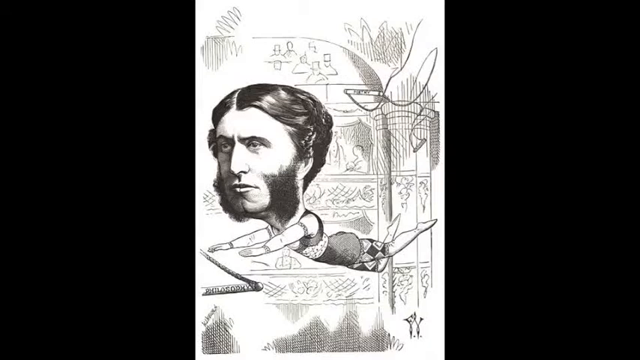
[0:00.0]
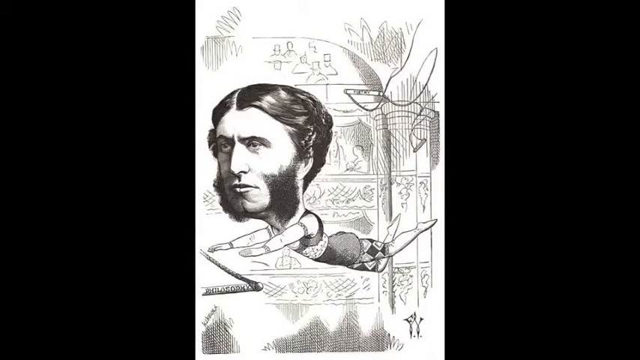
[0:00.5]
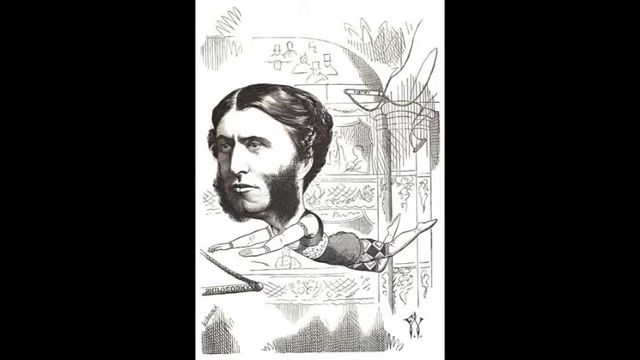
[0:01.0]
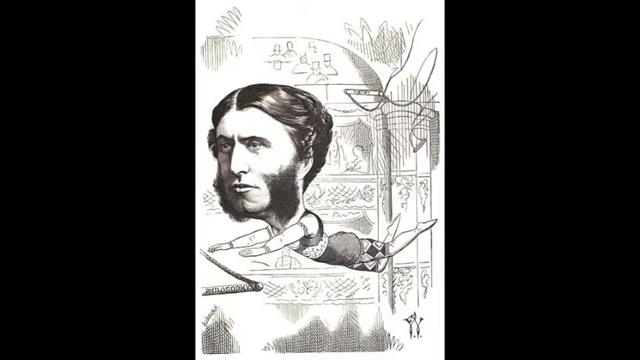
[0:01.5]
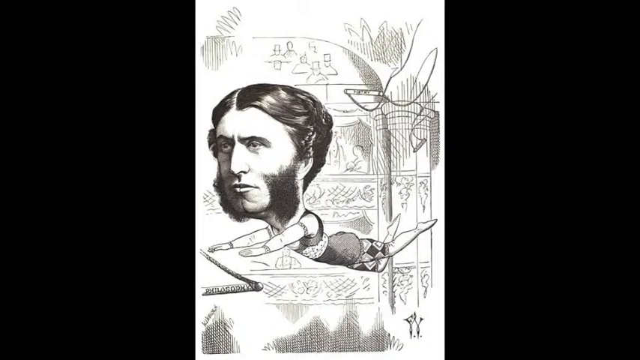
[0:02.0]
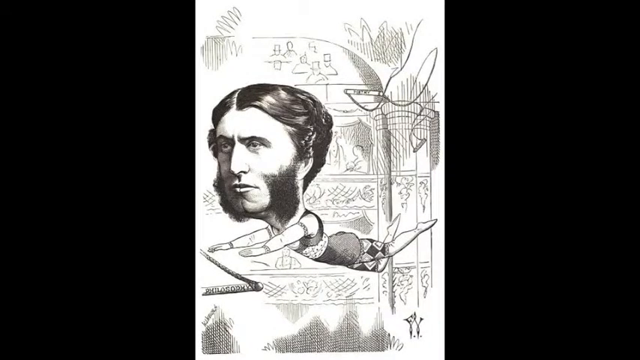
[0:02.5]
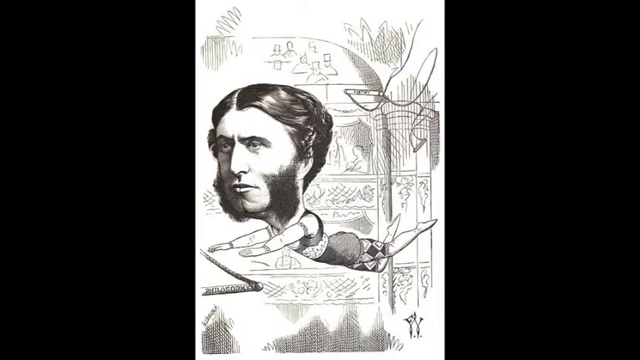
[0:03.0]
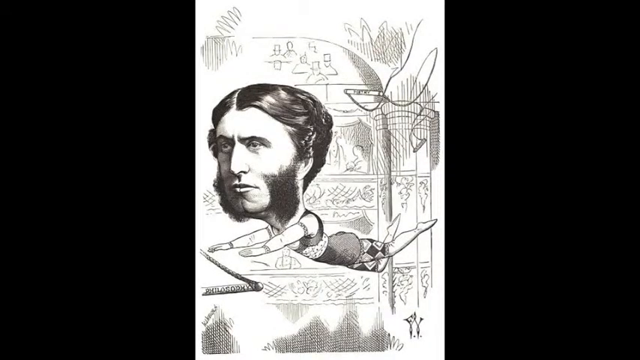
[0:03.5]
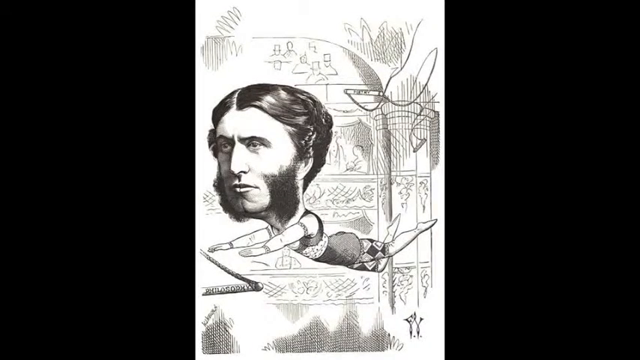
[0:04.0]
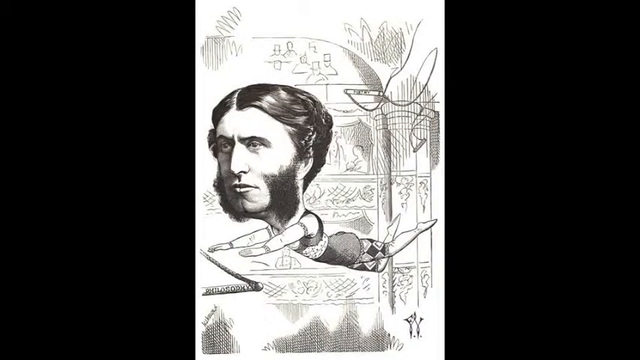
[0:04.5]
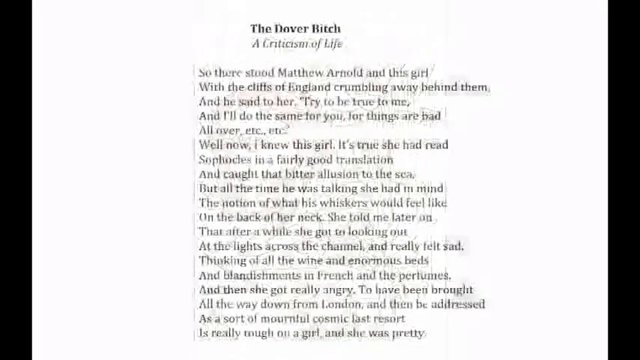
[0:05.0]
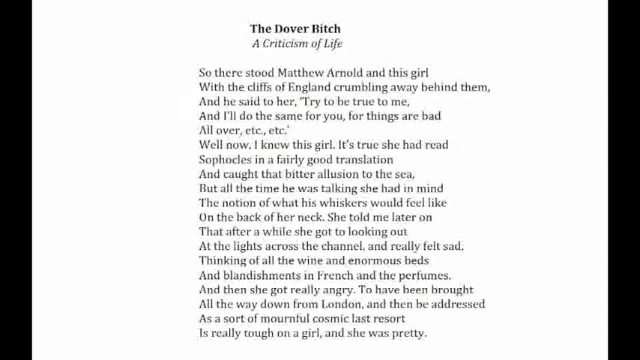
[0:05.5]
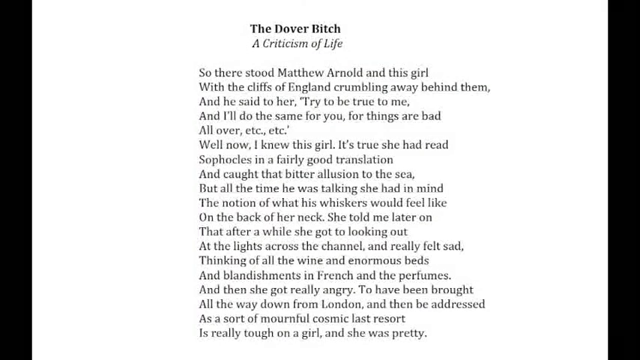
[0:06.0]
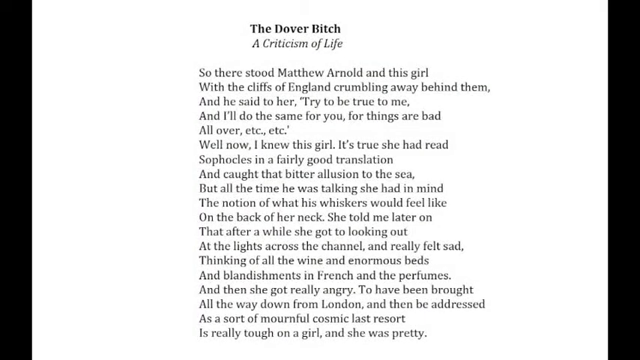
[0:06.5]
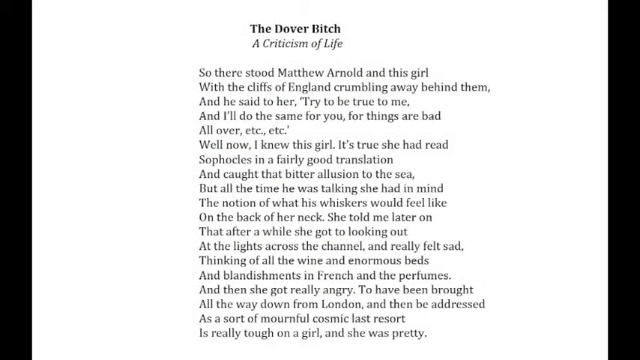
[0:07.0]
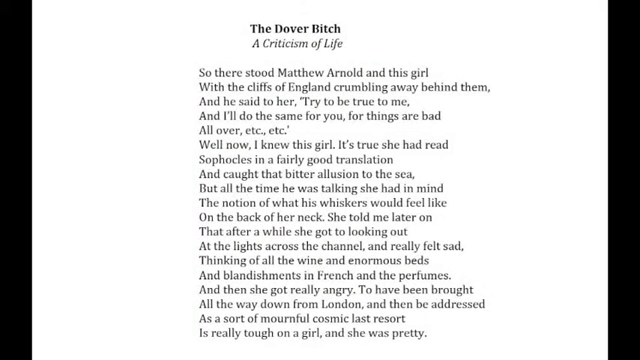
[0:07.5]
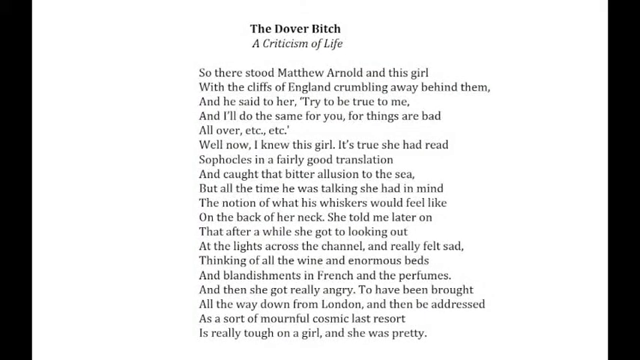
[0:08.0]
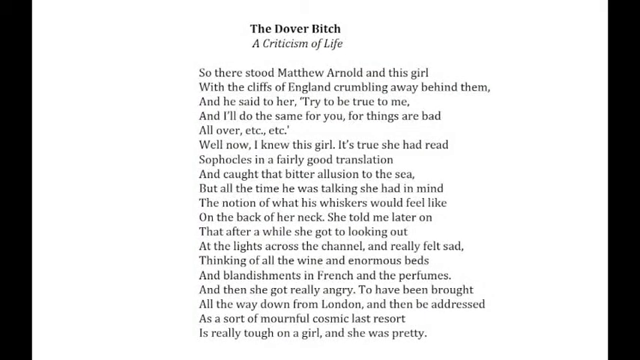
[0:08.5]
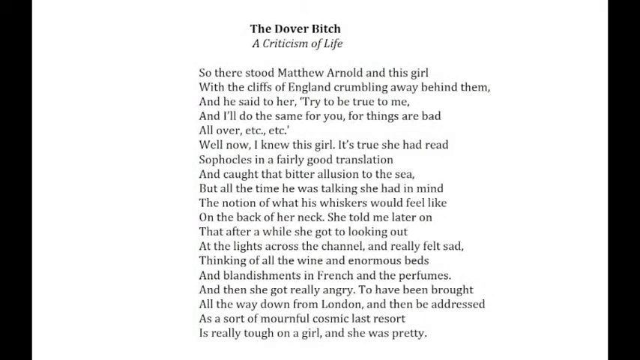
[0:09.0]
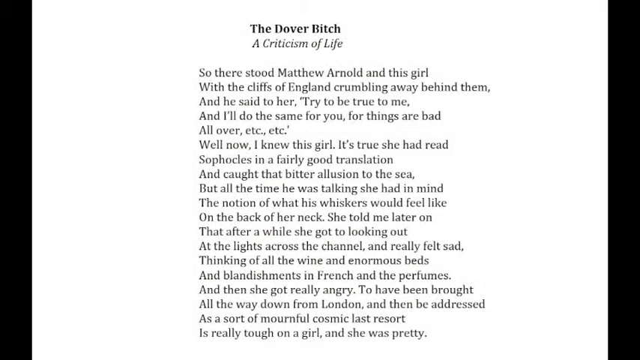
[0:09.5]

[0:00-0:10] A drawing shows a man who seems to be from the 1800s, with facial hair almost like lamb chops and almost a woman's haircut, parted in the middle and combed to the sides. He looks like he is part of a ring, like a circus, trying to get to a swinging-looking bar. He wears diamond-looking shorts and something like a dress; he is apparently the bearded lady. Then a typed paper document appears with the bold title "the Dover bitch" and, underneath in italics, "a criticism of life". There are about 20 lines of text, not right aligned, so the right edge is not flush. The first line reads "So there stood Matthew Arnold and this girl", the second "with the cliffs of England crumbling away behind him", the third "and he said to her try to be true to me", and the fourth "and I'll do the same for you for things are bad".